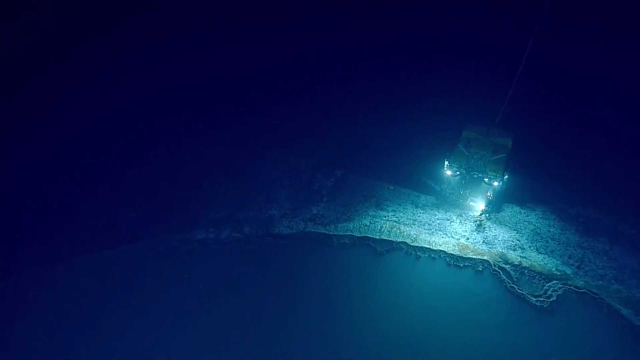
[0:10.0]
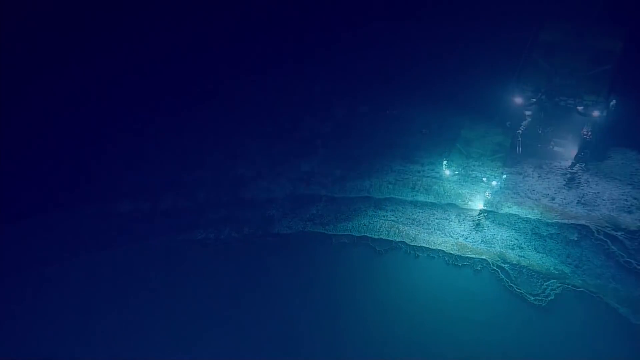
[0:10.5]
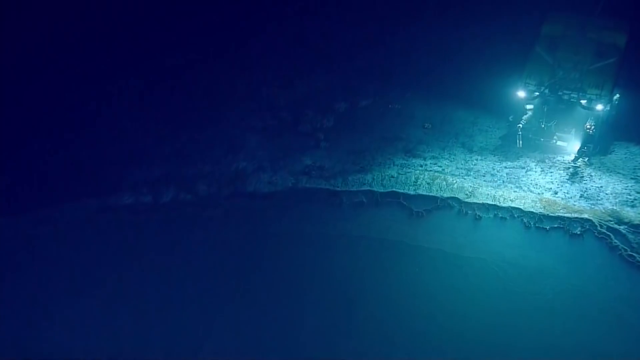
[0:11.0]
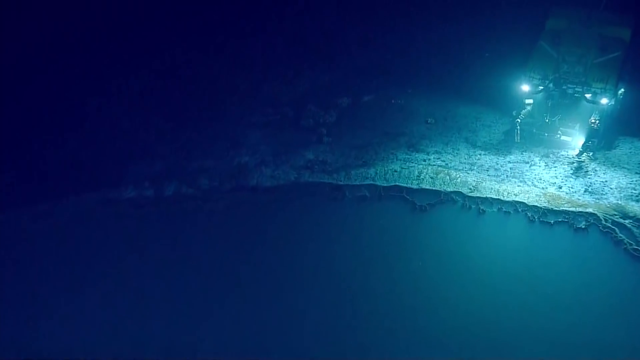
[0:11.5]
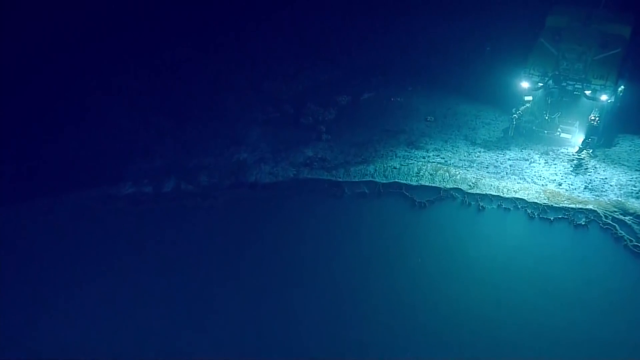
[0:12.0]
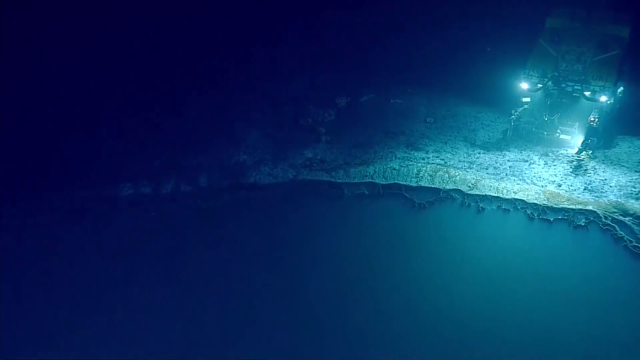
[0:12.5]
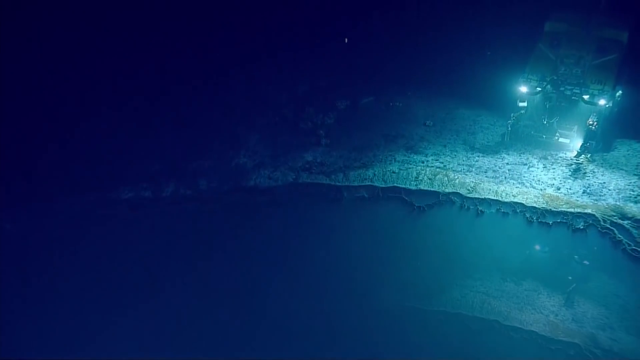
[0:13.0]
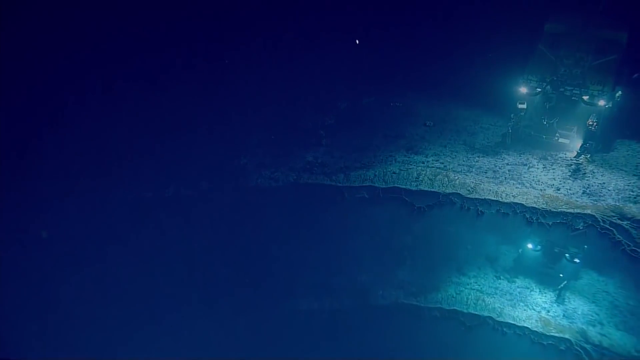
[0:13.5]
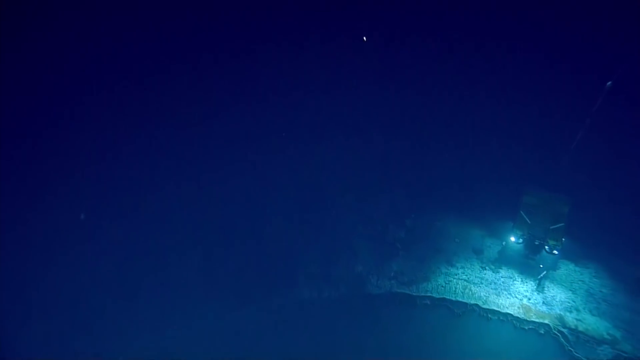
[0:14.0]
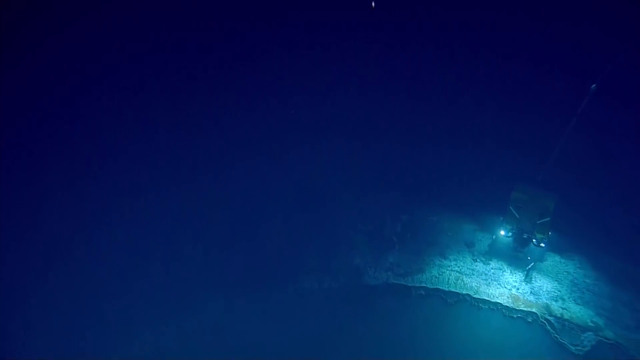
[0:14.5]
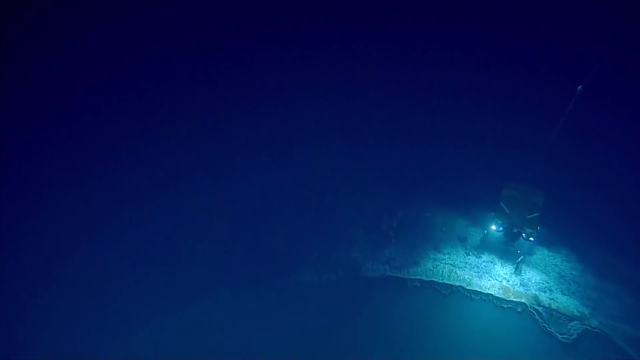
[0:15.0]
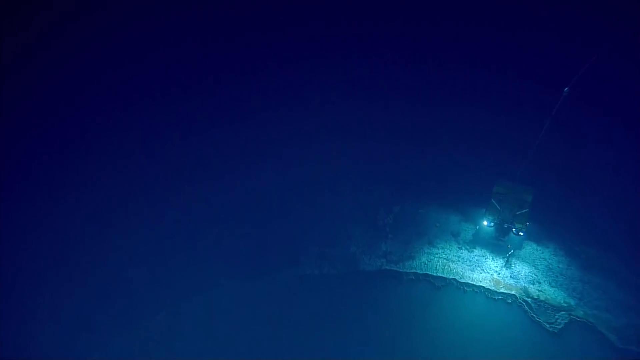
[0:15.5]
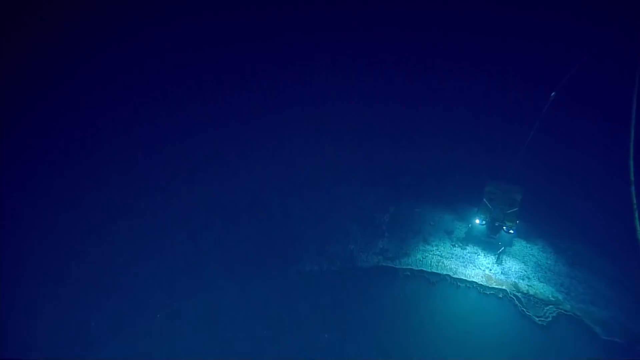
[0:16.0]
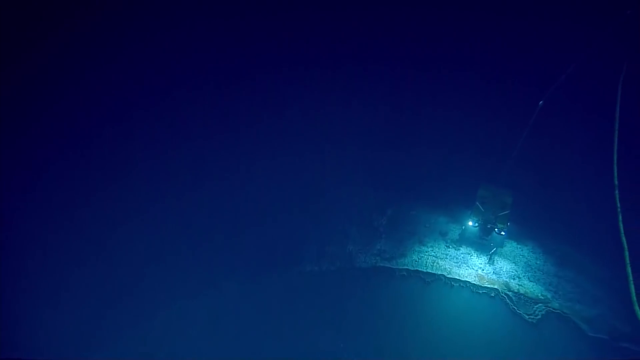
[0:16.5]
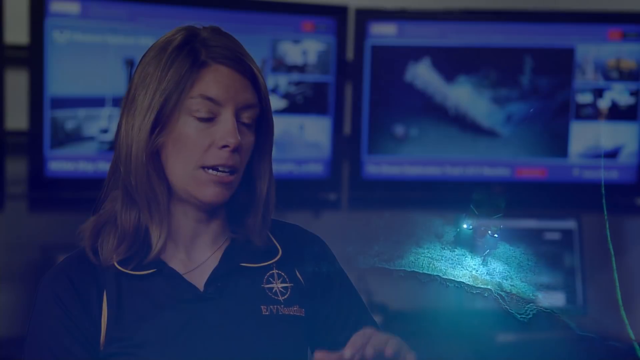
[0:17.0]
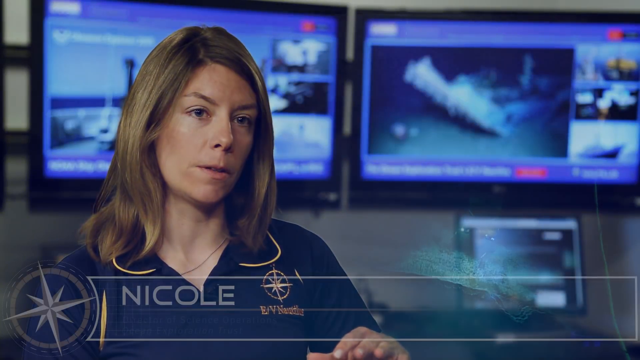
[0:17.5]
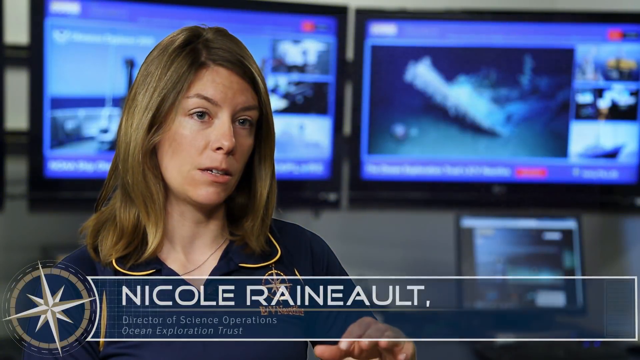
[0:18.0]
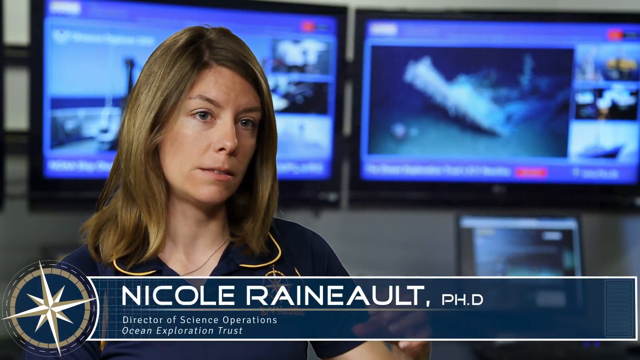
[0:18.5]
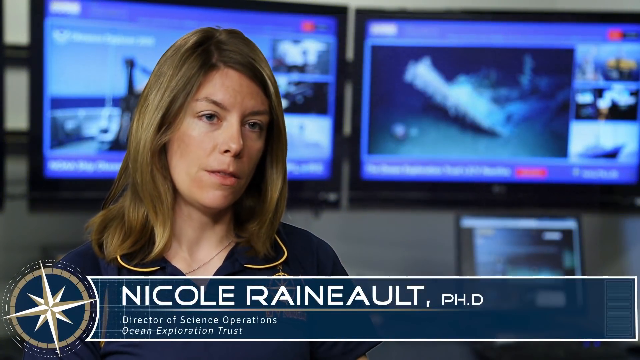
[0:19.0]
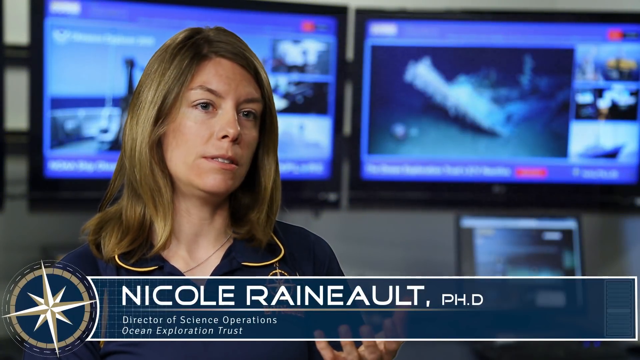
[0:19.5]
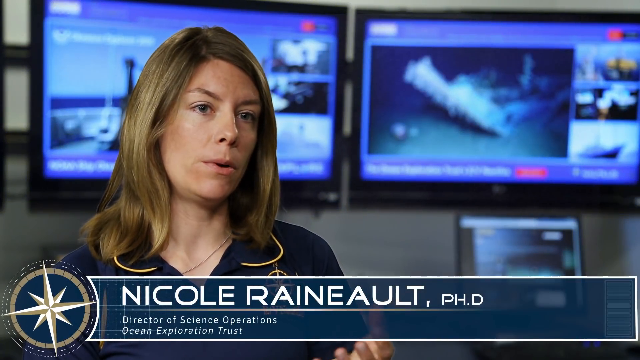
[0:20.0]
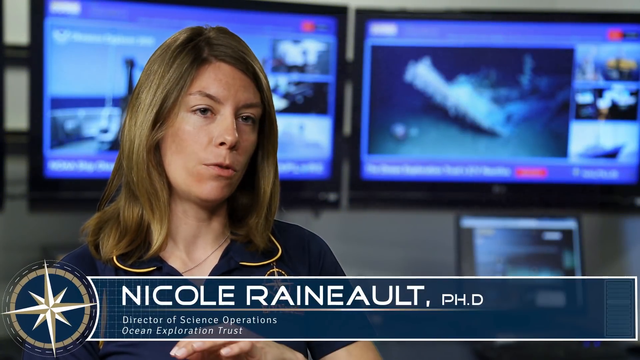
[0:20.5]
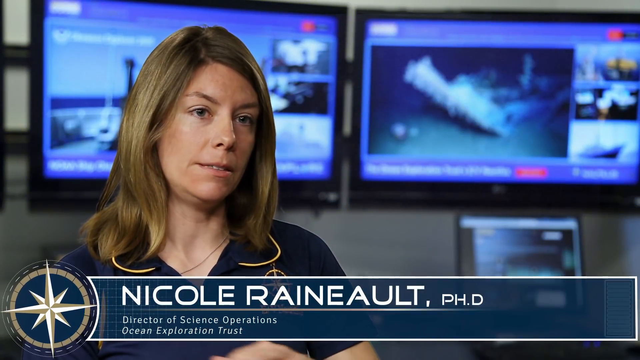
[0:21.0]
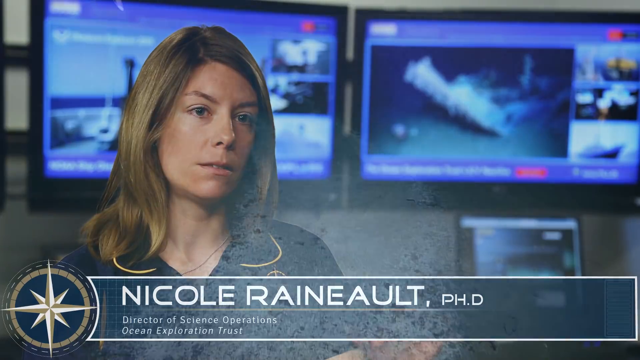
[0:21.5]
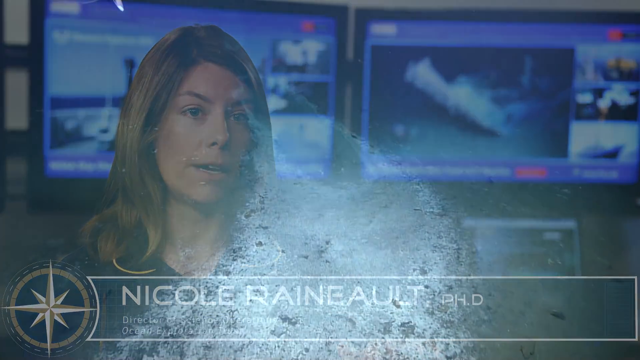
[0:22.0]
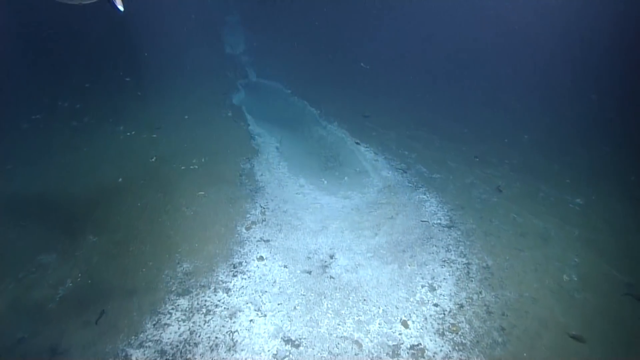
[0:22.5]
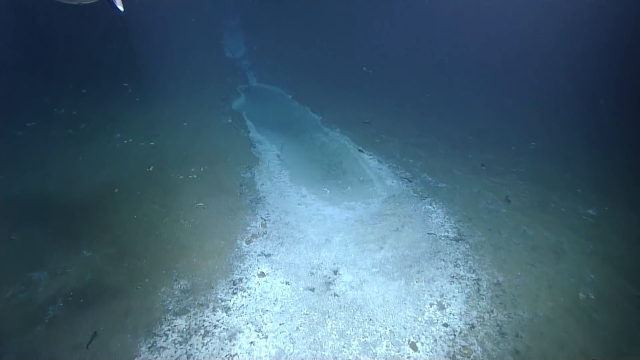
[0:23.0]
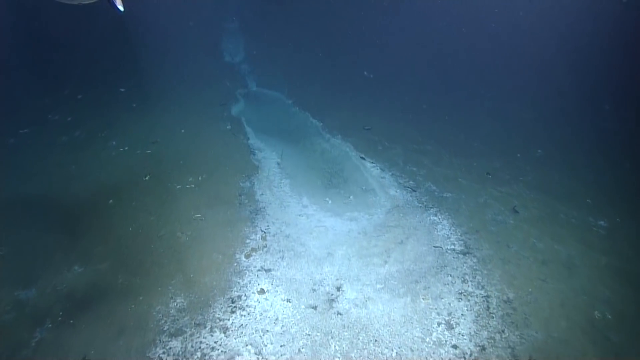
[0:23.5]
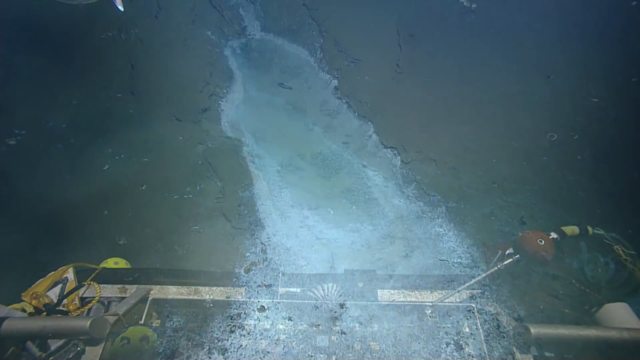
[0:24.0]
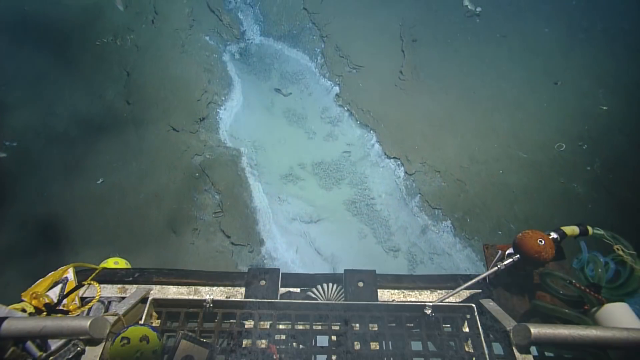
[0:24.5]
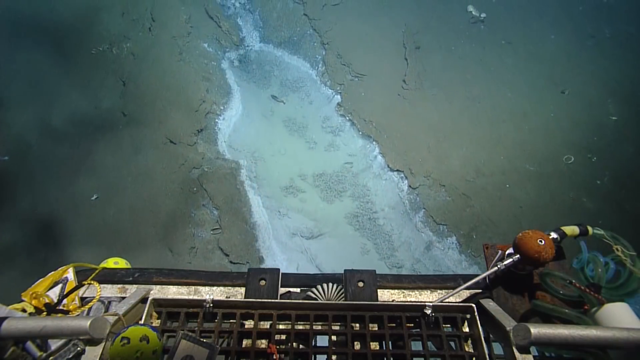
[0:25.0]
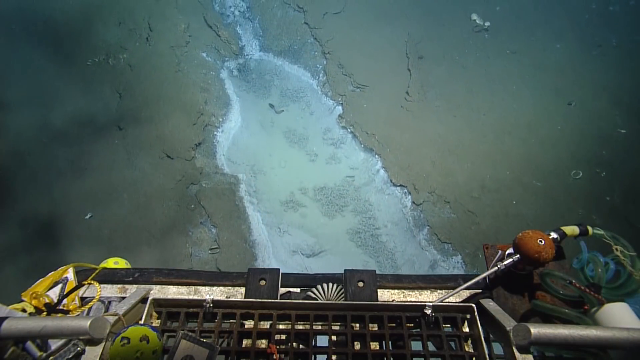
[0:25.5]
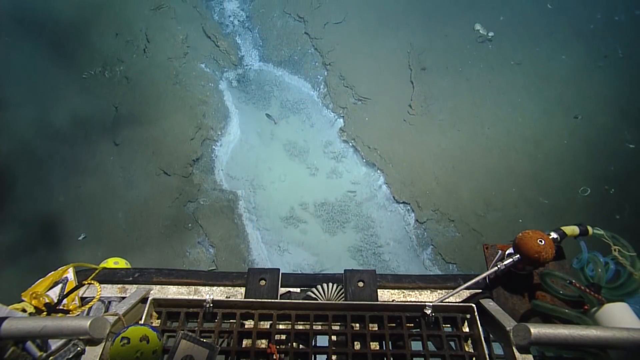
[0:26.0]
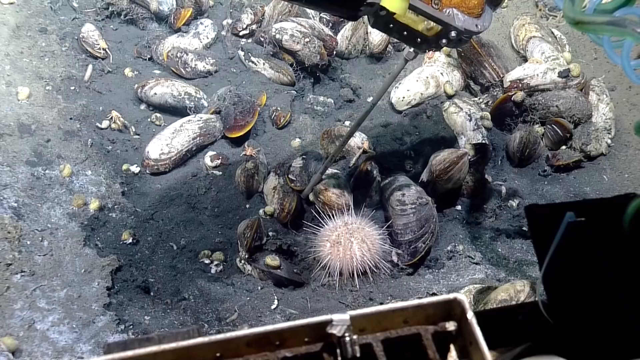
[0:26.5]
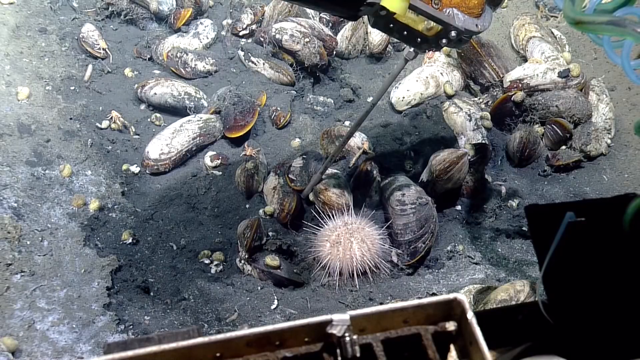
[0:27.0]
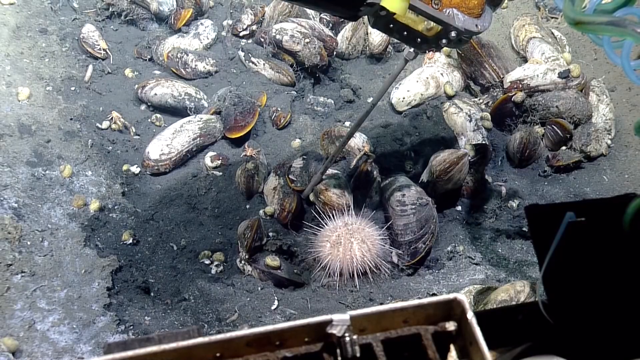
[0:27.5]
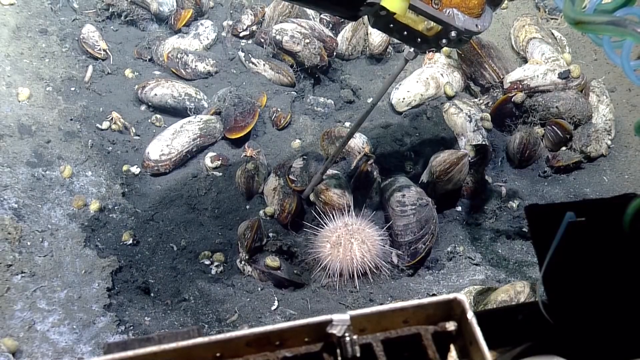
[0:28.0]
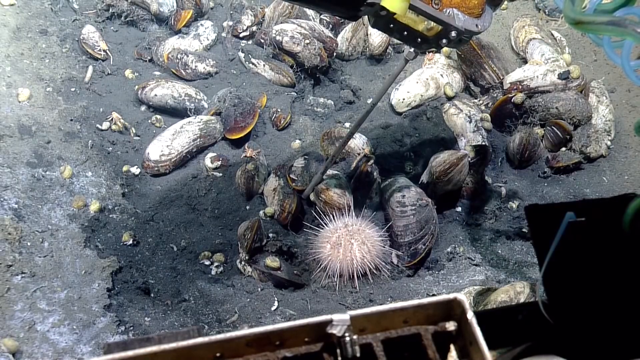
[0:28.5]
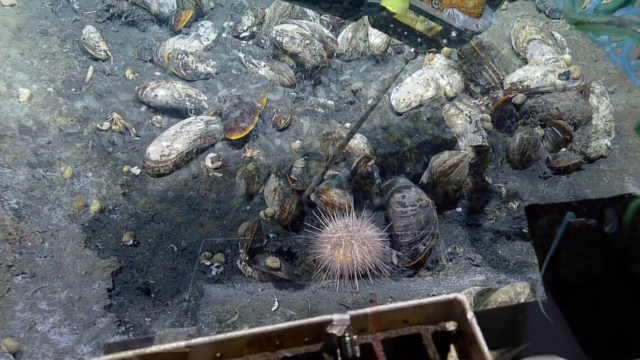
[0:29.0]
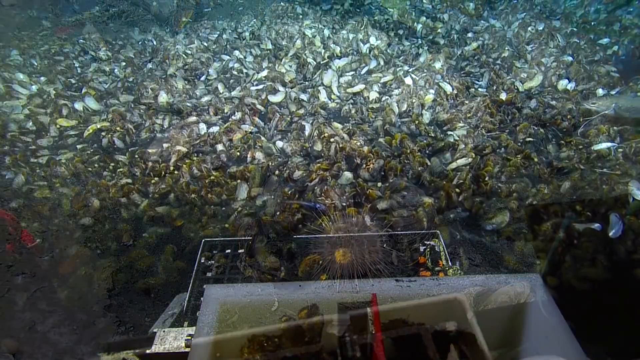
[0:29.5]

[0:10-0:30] The view is of the bottom of the ocean, which is very dark; most of the frame is dark blue. What looks like an illuminated surface is visible, with something generating light. It is hard to tell what it is, but it almost looks like a small minivan parked on the ocean floor, lighting up the floor directly in front of it. The camera pans around slowly. A woman with long hair appears, identified on screen as "Nicole Renault, PhD." She wears a black collared shirt with some yellow trim and a compass logo on her left breast. Behind her are two video screens showing what look to be different underwater scenes. Next, the illuminated ocean floor appears to be seen from the perspective of the submarine as it moves across the bottom. A bunch of shells from mussels and sea urchins come into view.